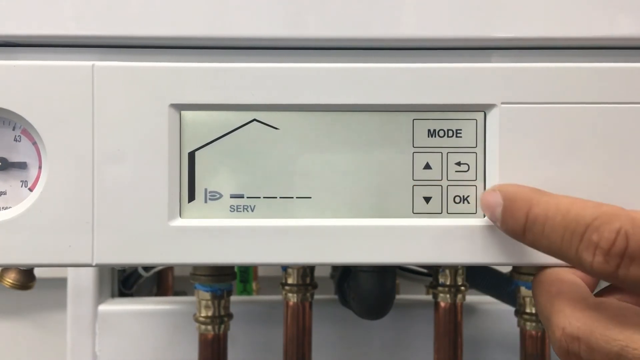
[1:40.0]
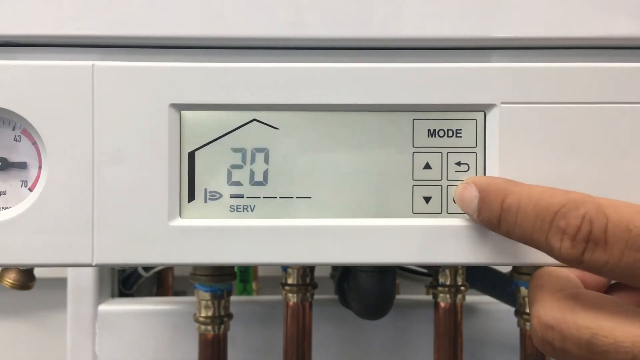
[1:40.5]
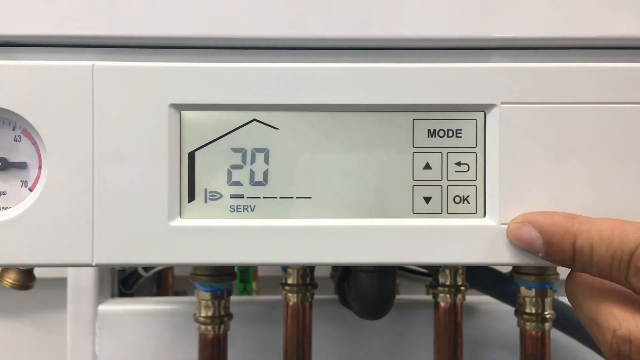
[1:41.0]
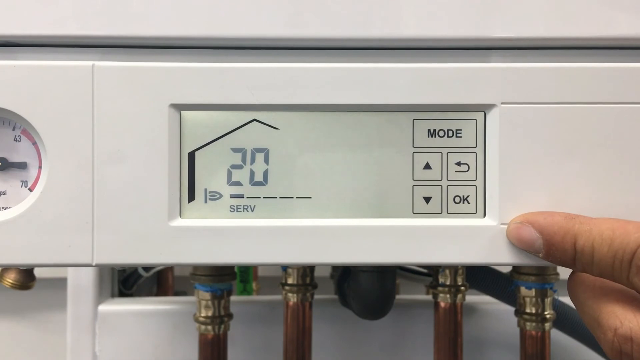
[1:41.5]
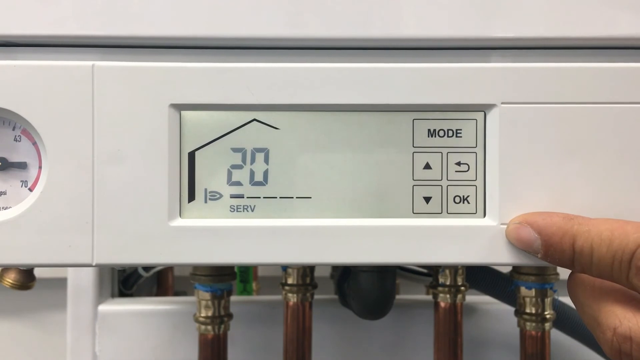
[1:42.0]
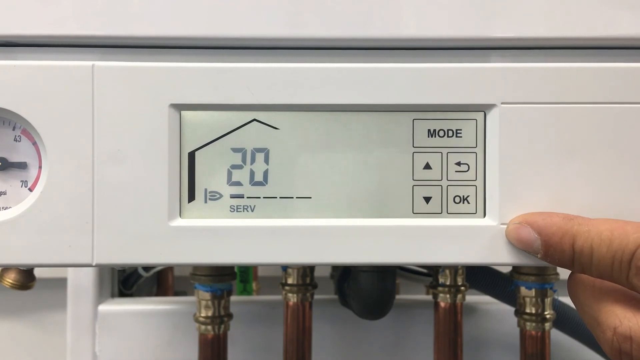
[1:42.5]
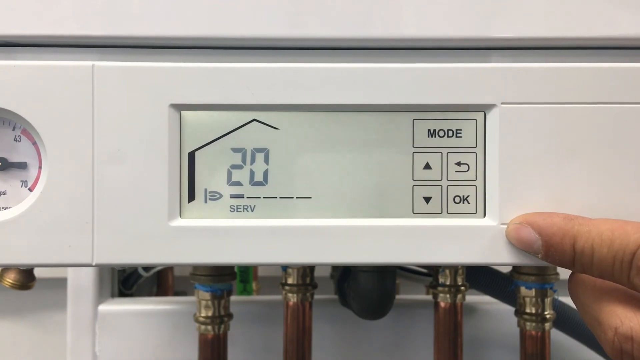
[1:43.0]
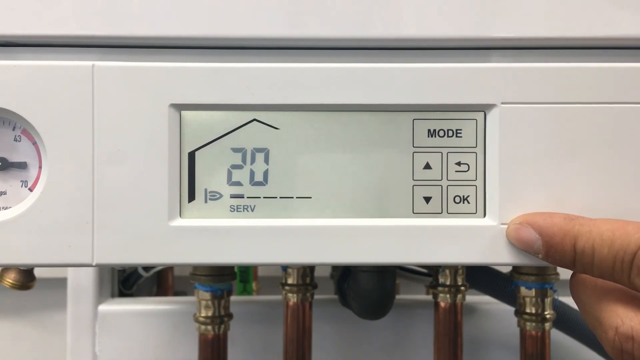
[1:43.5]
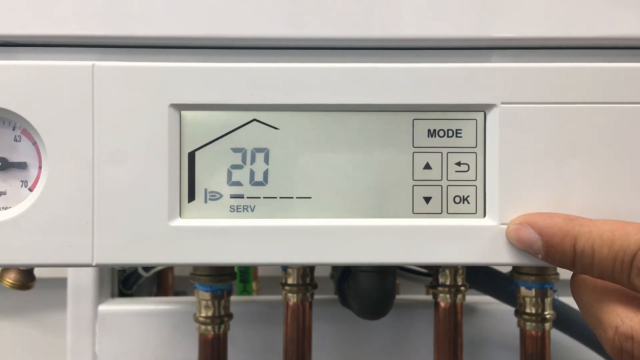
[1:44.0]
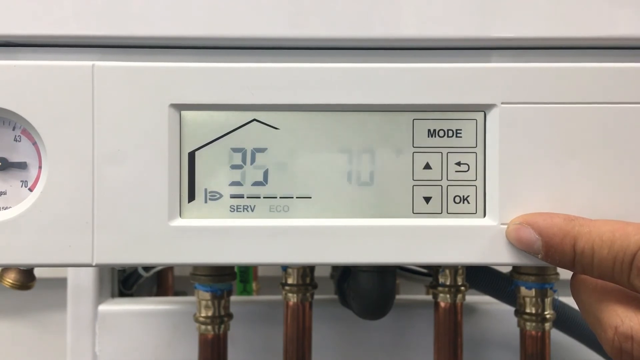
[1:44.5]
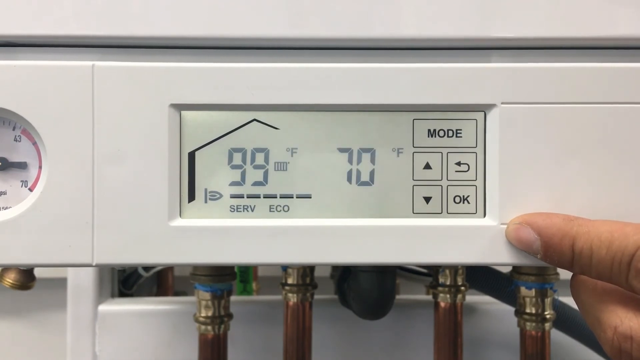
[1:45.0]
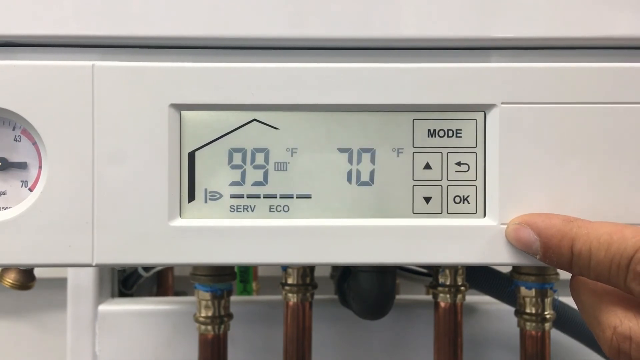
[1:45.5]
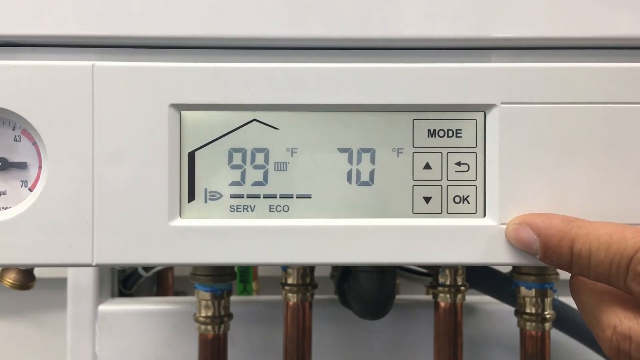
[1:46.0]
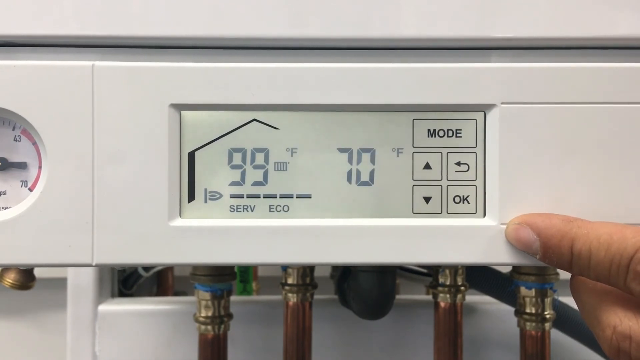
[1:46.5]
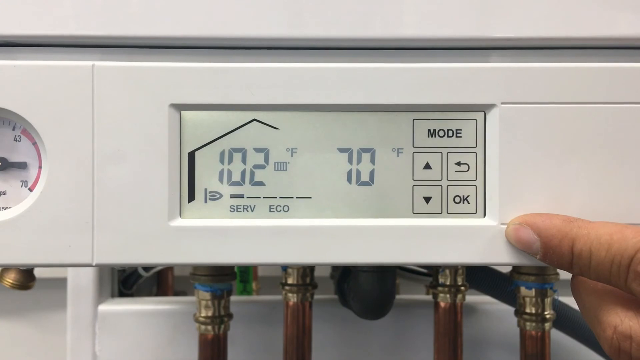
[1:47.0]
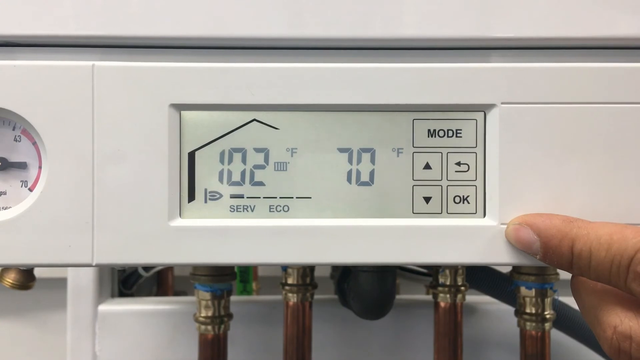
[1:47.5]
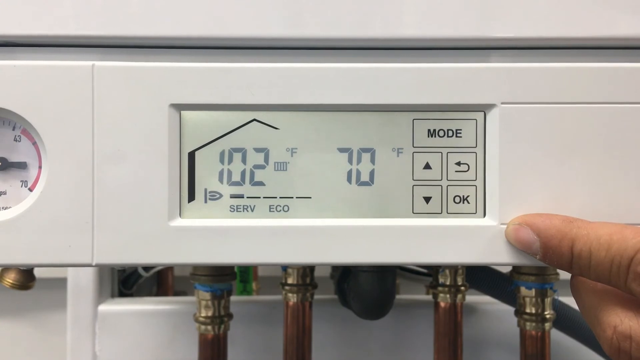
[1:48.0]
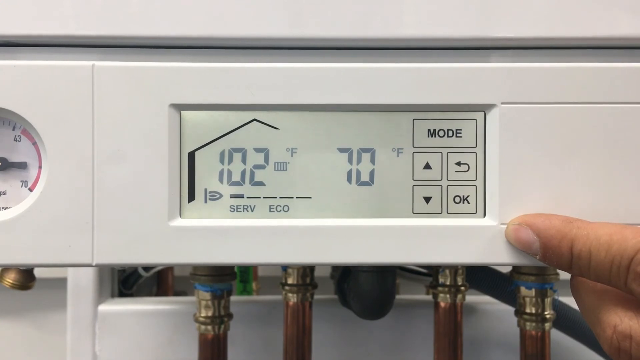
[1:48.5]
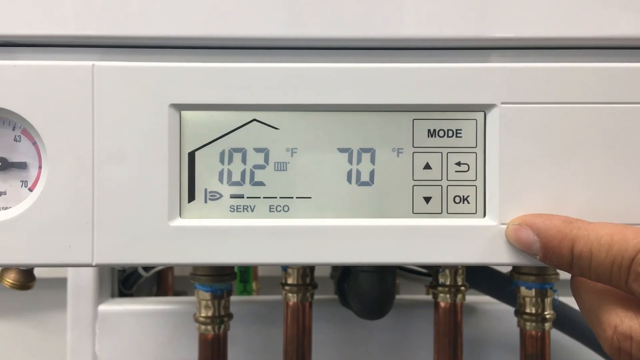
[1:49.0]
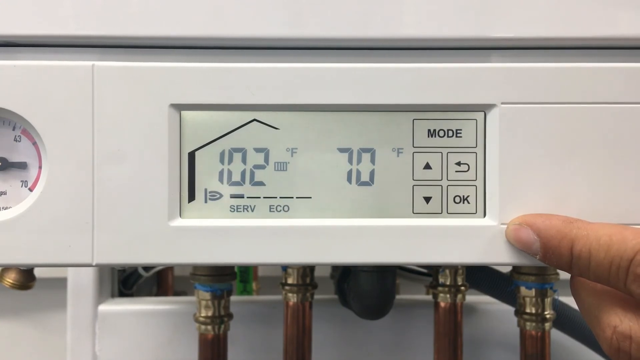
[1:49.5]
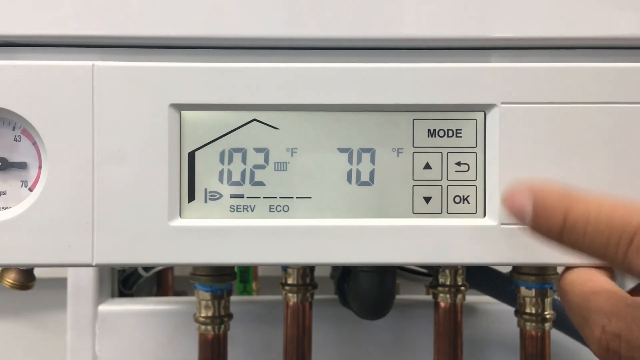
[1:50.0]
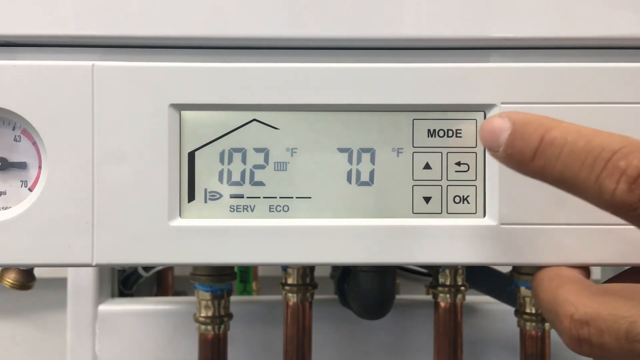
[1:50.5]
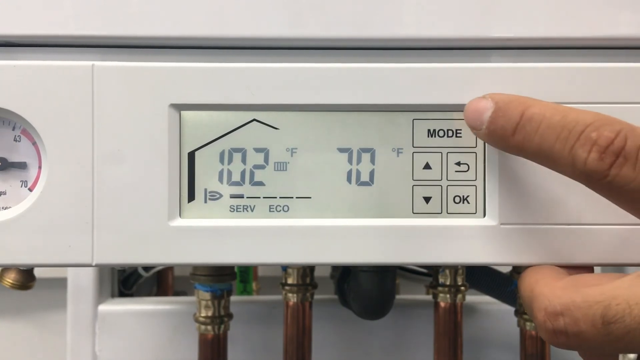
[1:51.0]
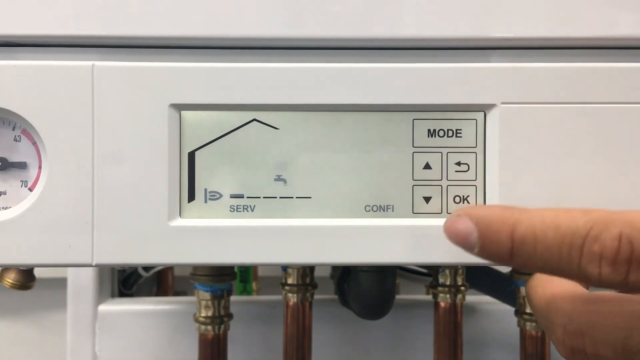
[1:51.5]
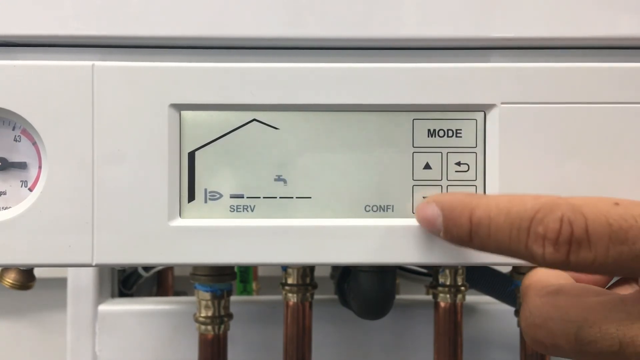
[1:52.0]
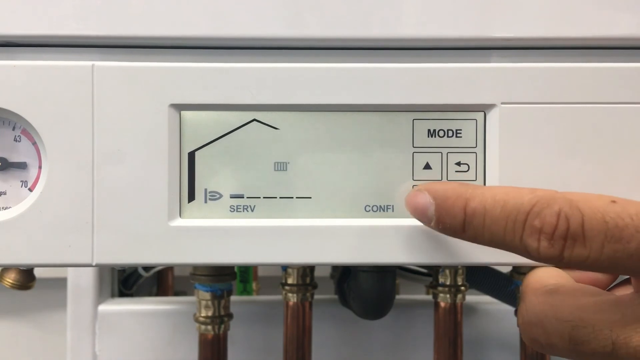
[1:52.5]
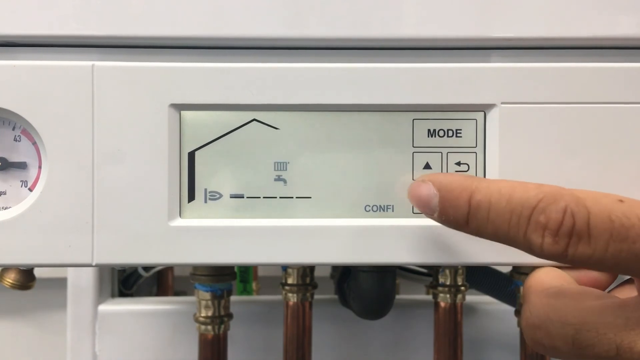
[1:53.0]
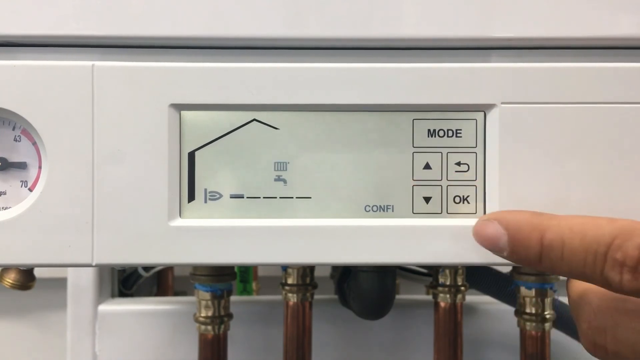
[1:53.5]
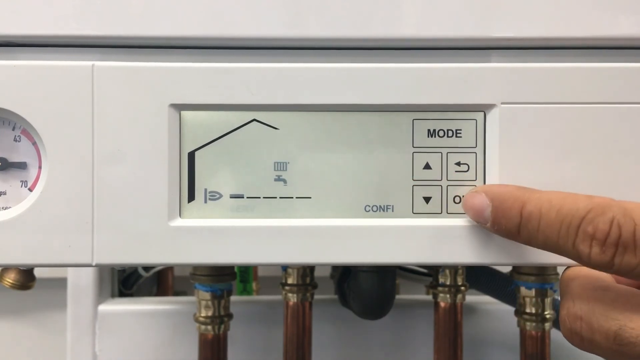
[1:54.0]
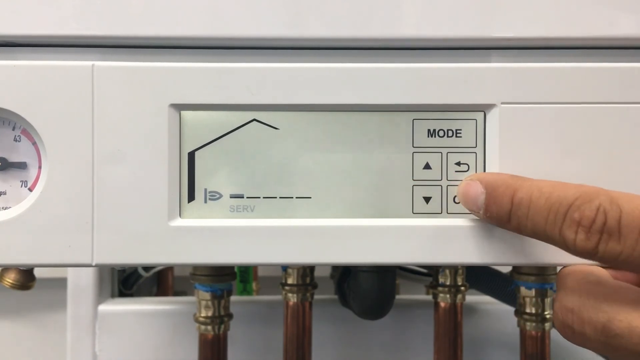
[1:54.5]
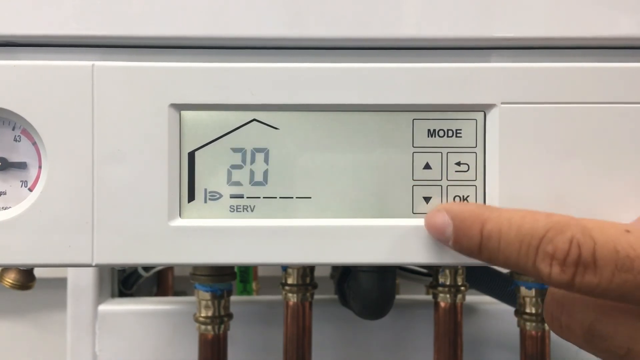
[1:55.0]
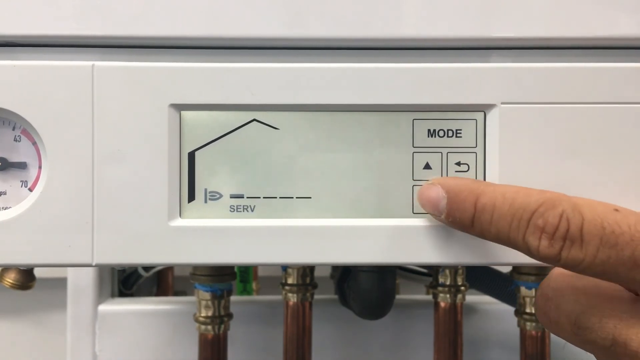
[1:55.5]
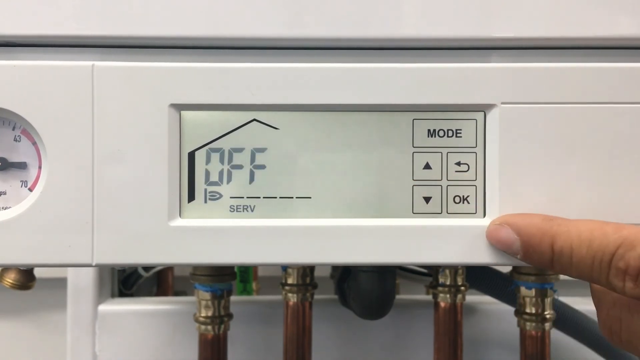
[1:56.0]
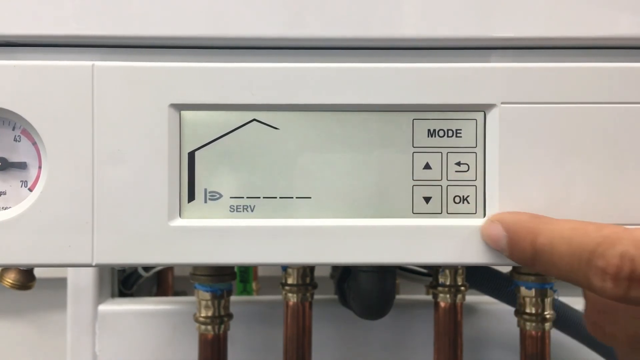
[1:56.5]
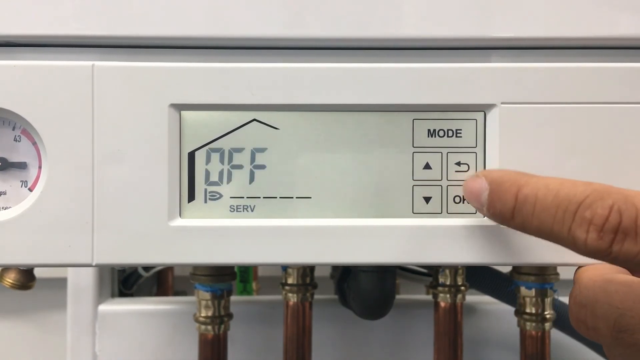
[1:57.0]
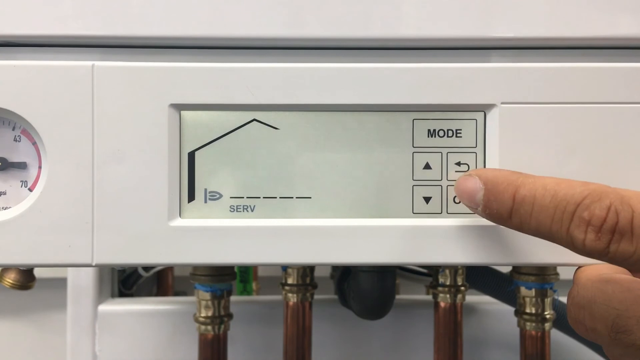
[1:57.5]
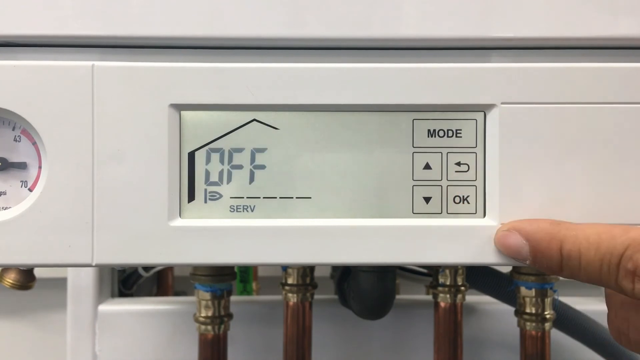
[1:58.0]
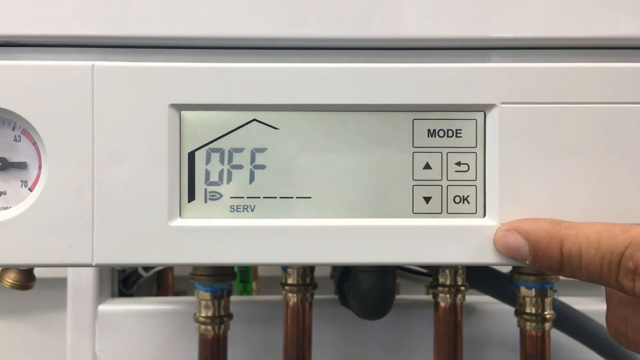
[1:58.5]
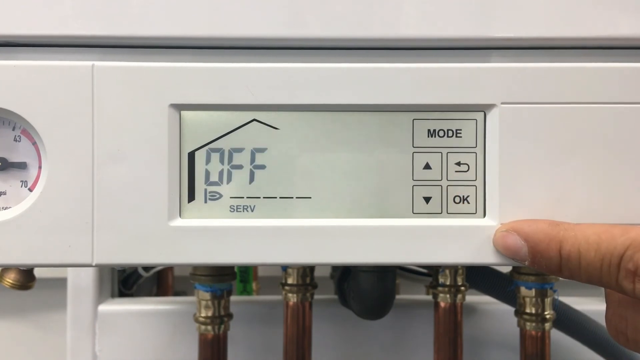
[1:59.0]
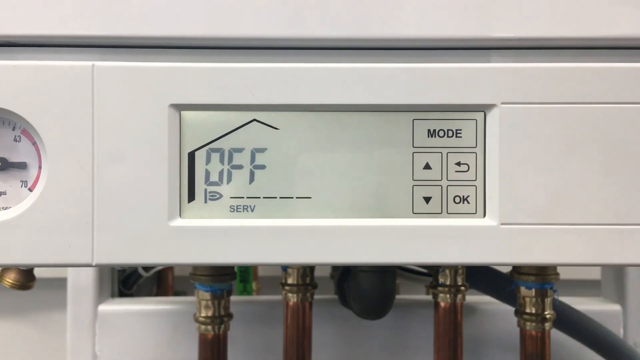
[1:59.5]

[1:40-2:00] The display shows the mode, arrow up, arrow down, back and OK buttons, along with the house image with the flame and the word "self." The man's hand points at the OK button; when he presses it, the number 20 appears. After it disappears, the temperature rises from 95 to 99 degrees Fahrenheit while outside stays at 70 degrees Fahrenheit. "ECO" appears and the temperature reaches 102 degrees Fahrenheit. Mode is pressed, then the down arrow, and "SERVICE" blinks. OK is pressed, 20 blinks, the down arrow is pressed, "OFF" appears, and OK is pressed.